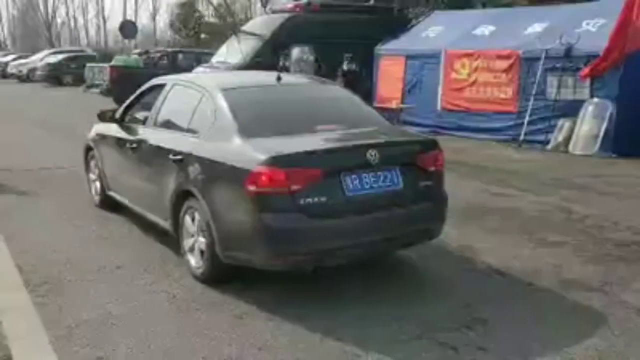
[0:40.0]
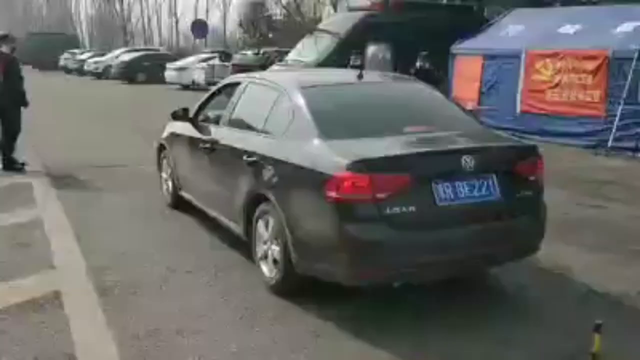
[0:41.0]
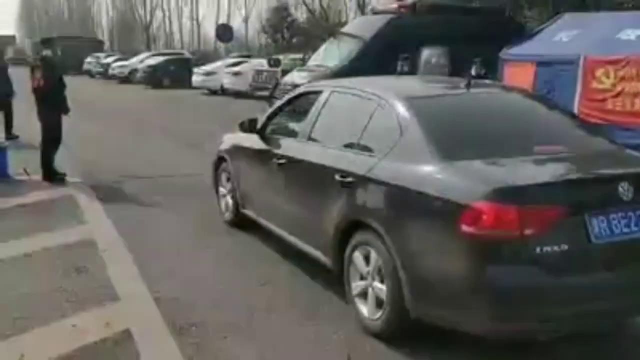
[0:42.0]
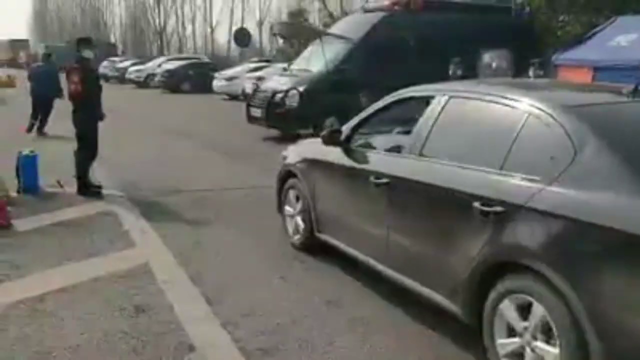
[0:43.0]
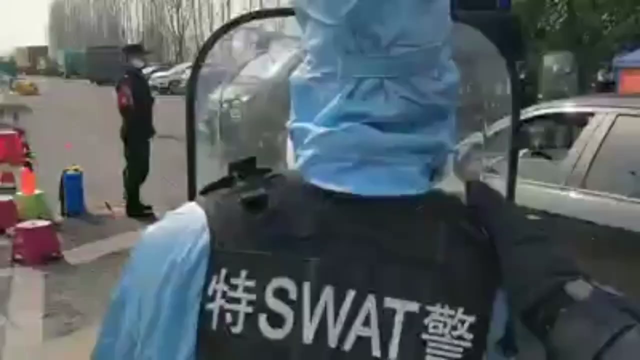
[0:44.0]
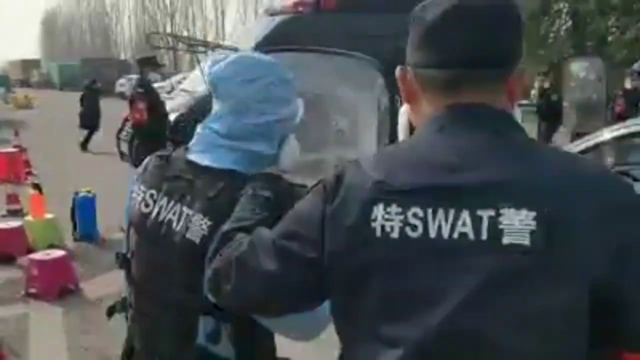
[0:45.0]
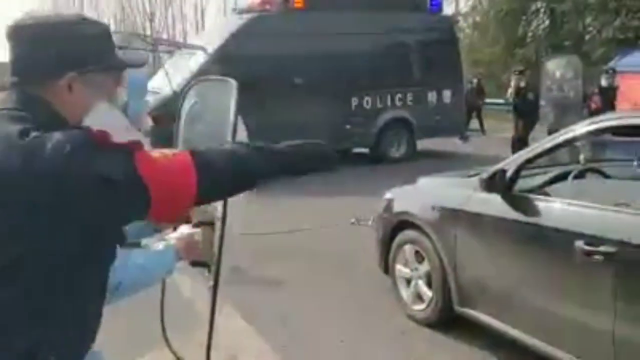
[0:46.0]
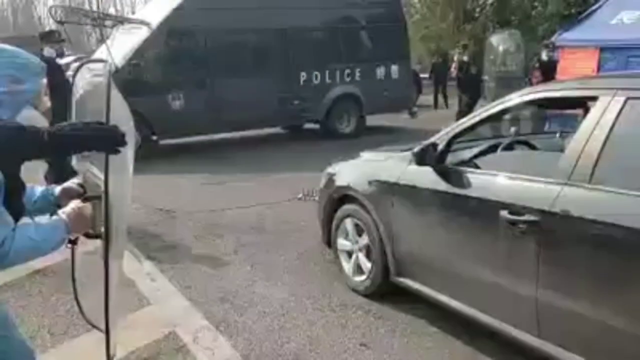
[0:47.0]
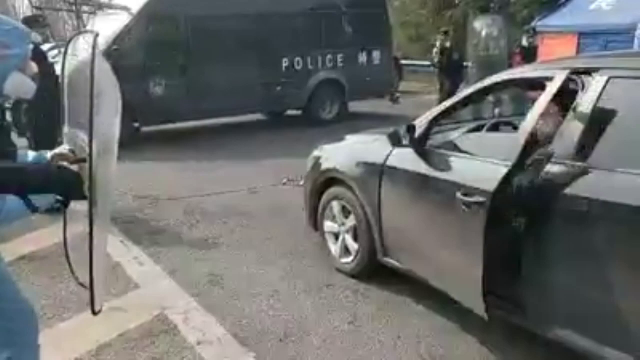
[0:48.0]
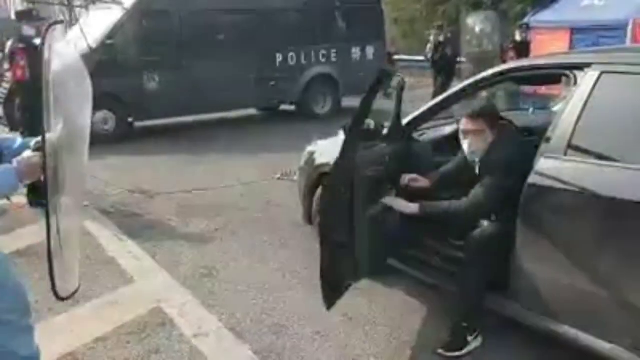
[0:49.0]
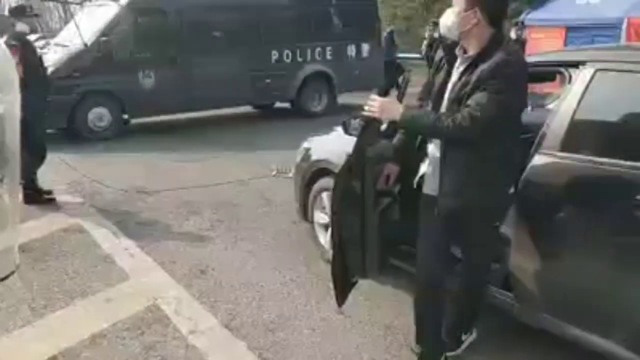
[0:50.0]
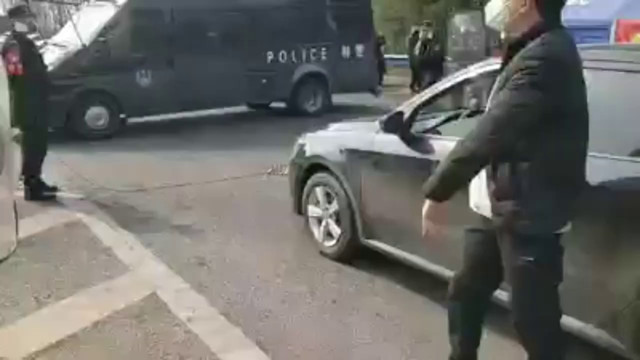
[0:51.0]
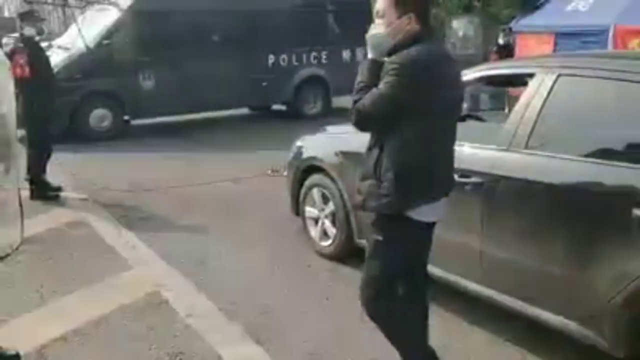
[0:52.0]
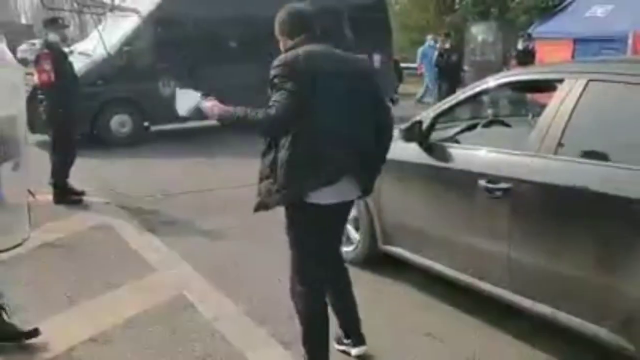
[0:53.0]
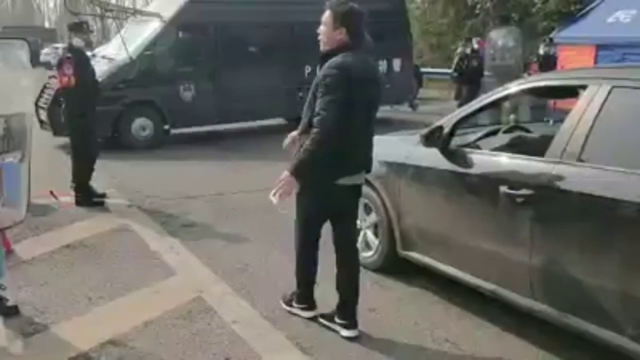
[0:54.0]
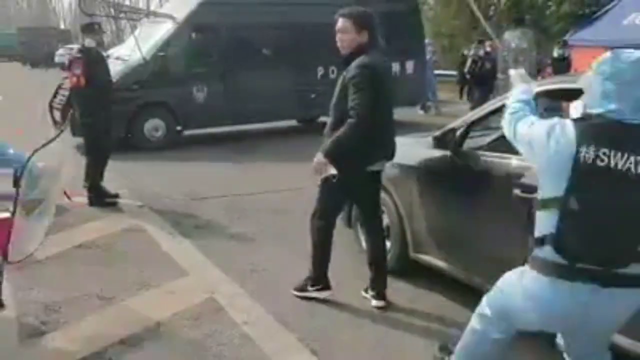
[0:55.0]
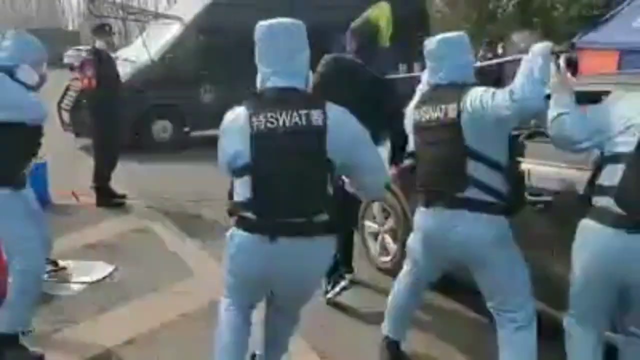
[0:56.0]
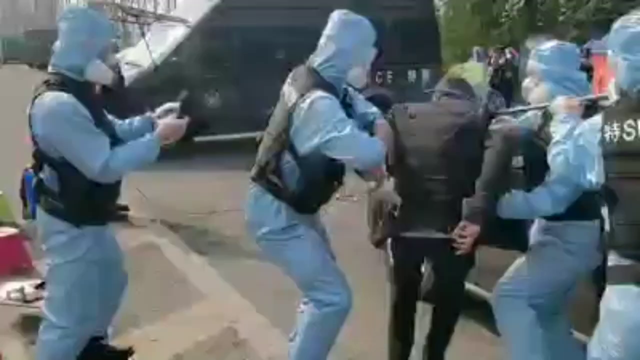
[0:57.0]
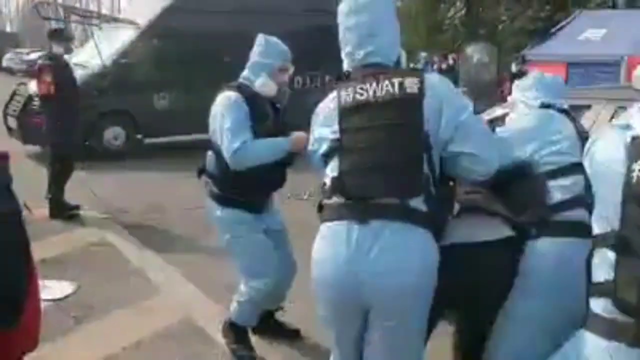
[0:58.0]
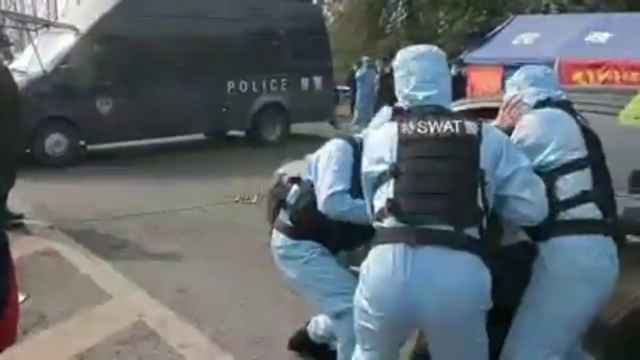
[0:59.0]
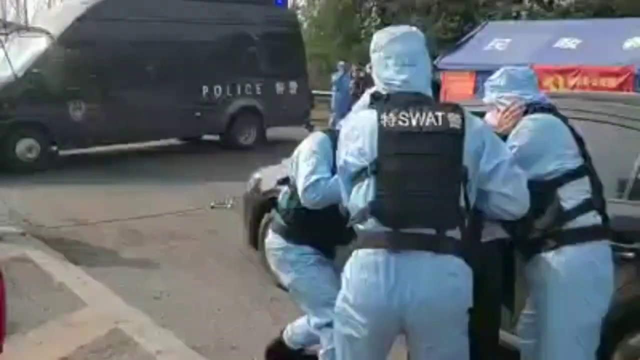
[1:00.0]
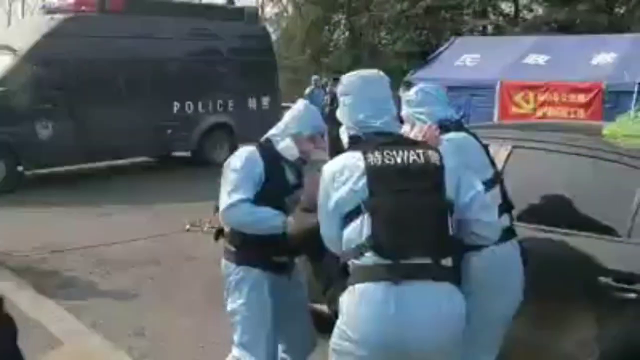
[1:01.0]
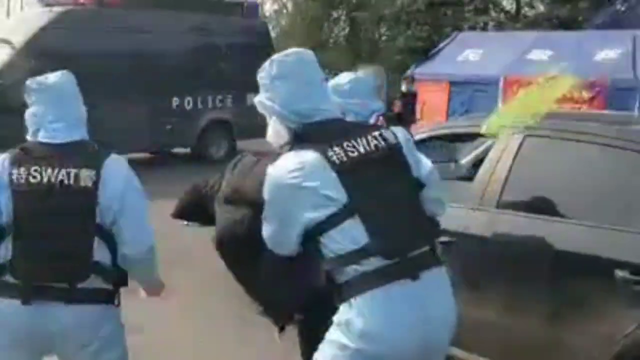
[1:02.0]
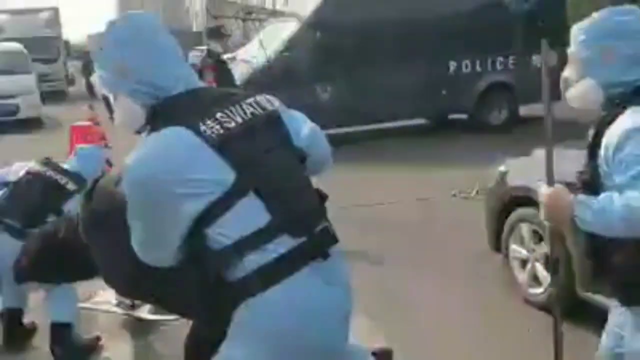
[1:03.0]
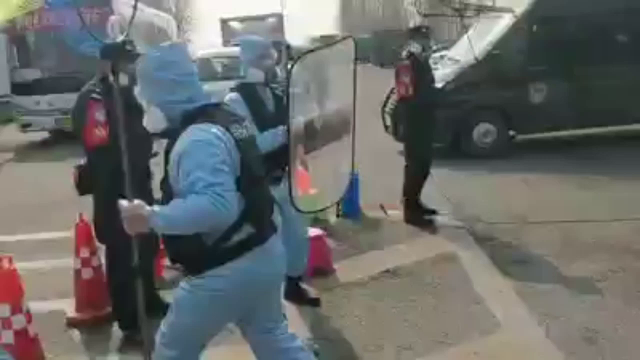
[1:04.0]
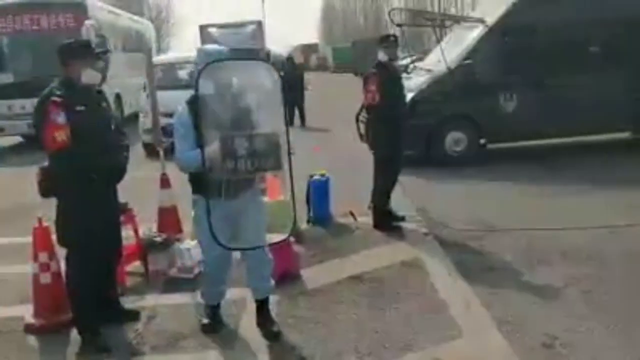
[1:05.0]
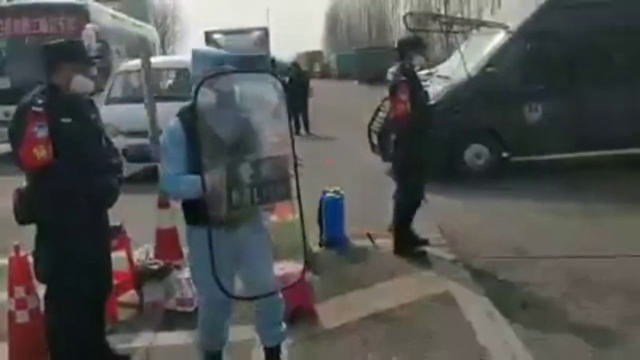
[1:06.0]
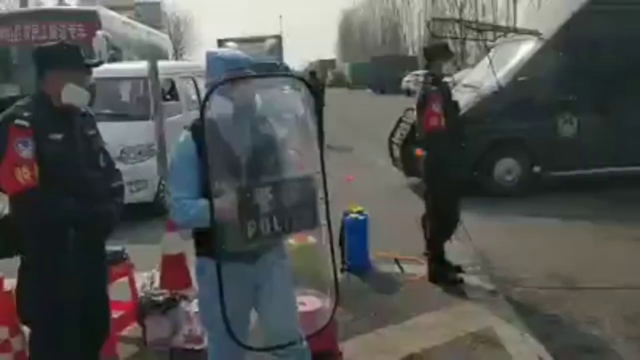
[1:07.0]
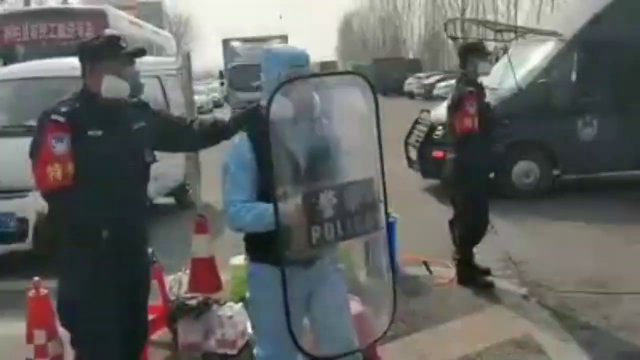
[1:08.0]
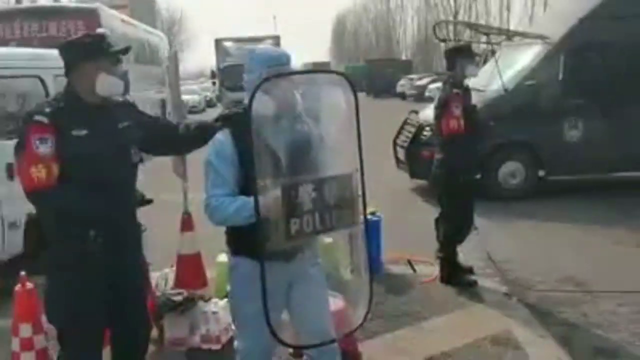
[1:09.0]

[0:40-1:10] A black VW vehicle is parked facing the left side of the screen, seen from the back of the car. It has a blue license plate with white letters and numbers. Several cars are parked along the right-hand side of the car, and there is a blue tent with a red flag on it. The camera pans over to show some police officers, some wearing full black body suits and some wearing blue, all with masks on. Some of them are holding police shields. One walks behind another, and they go to the driver's side of the car and stand behind a police shield. A man wearing a mask gets out of the car. He points to the left, takes his mask off, and spits on the ground. The police all rush in to swarm him, put a bag net attached to a stick over his head, and start to put his hands behind his back. They escort him to the left, out of the frame.